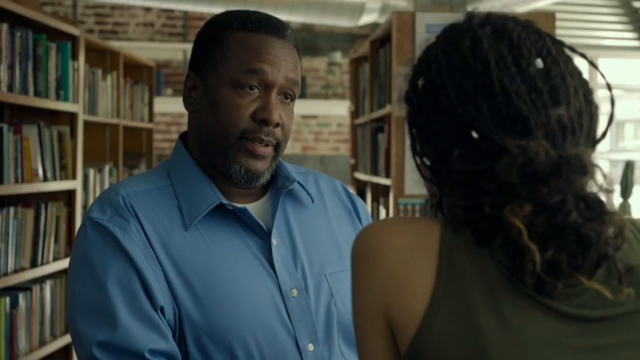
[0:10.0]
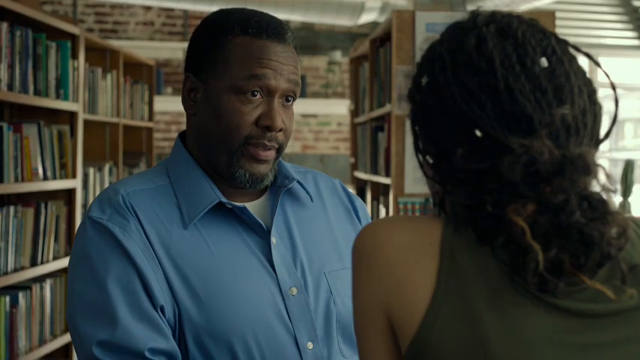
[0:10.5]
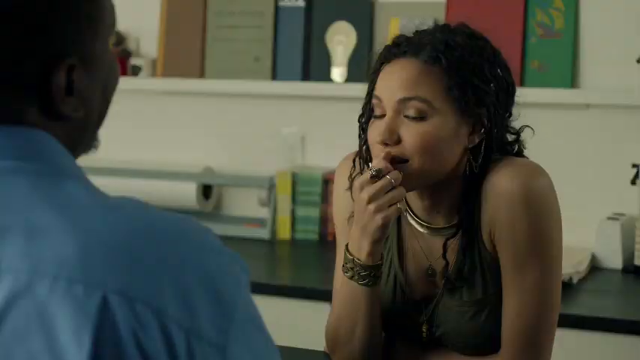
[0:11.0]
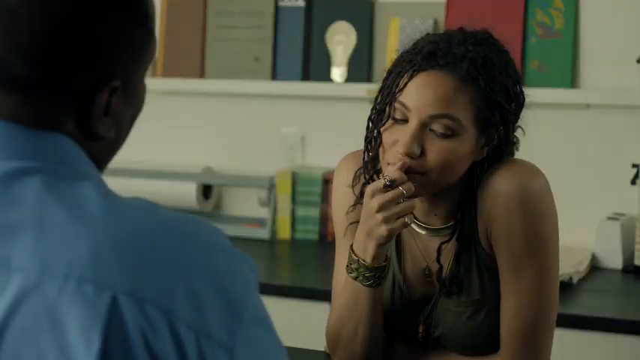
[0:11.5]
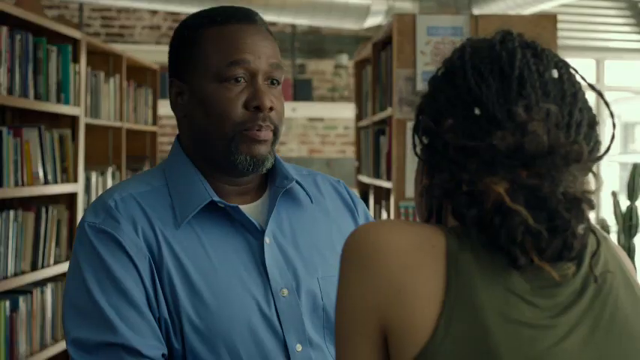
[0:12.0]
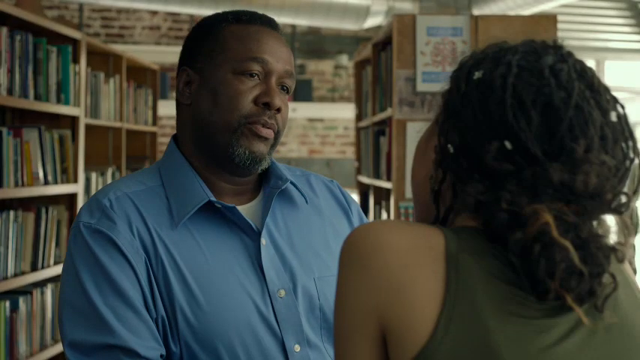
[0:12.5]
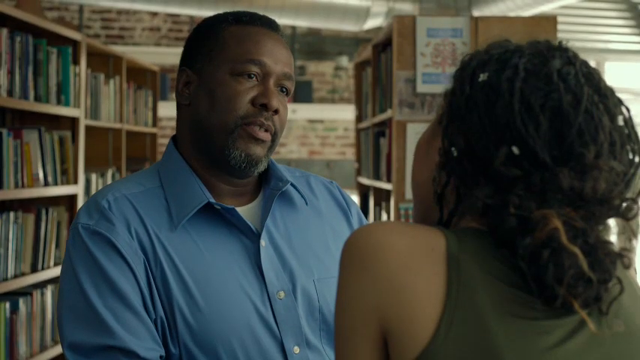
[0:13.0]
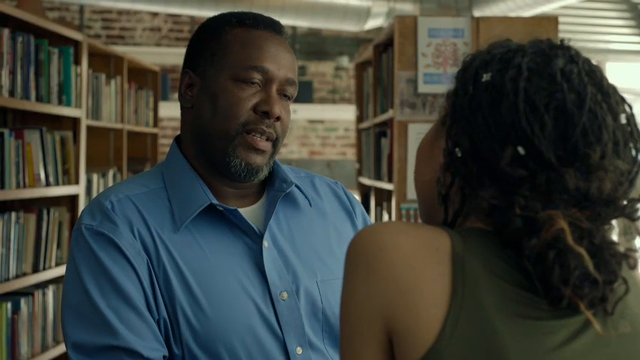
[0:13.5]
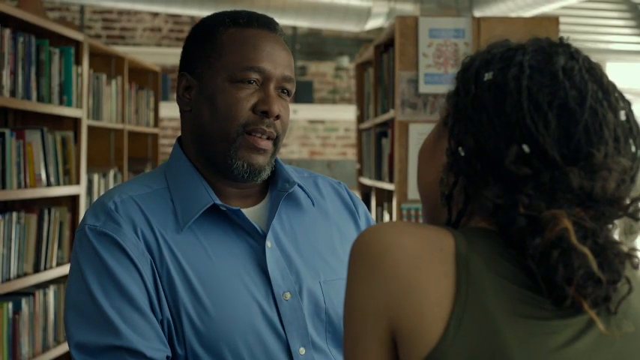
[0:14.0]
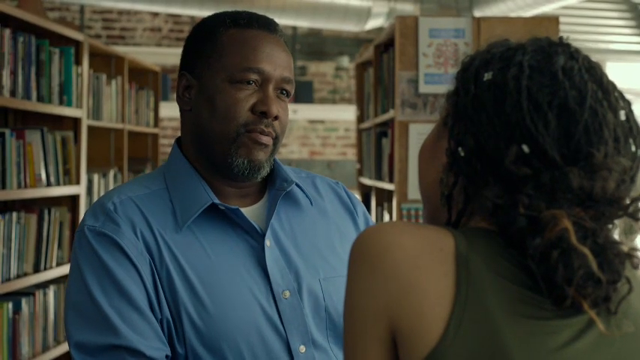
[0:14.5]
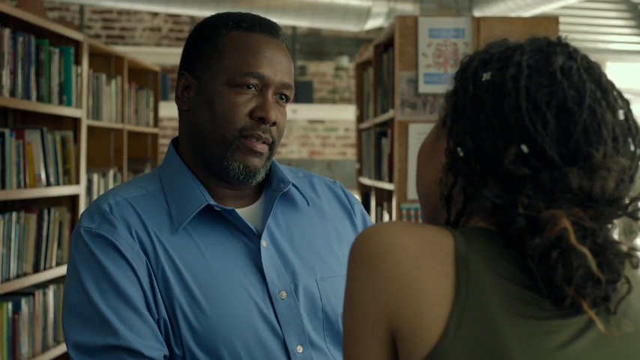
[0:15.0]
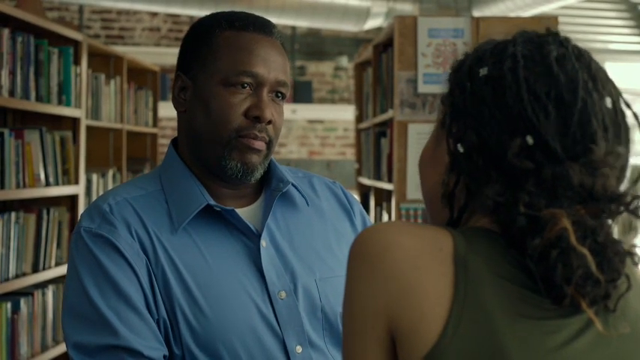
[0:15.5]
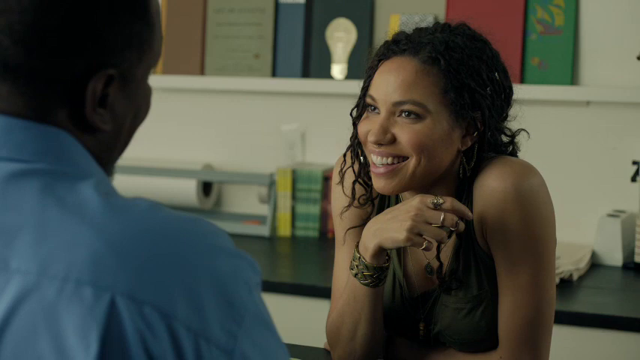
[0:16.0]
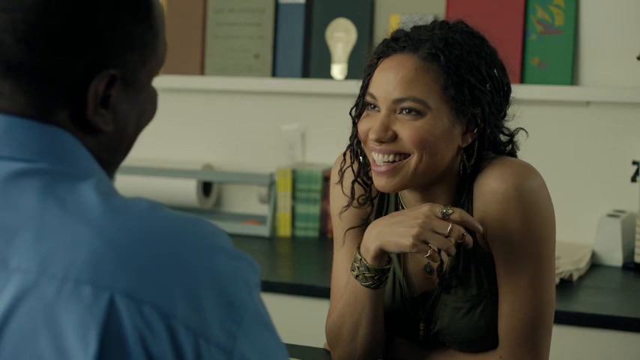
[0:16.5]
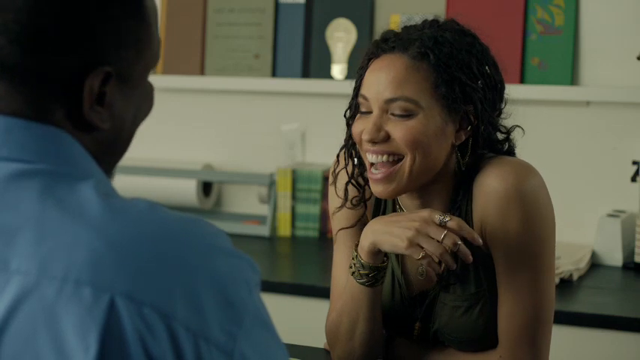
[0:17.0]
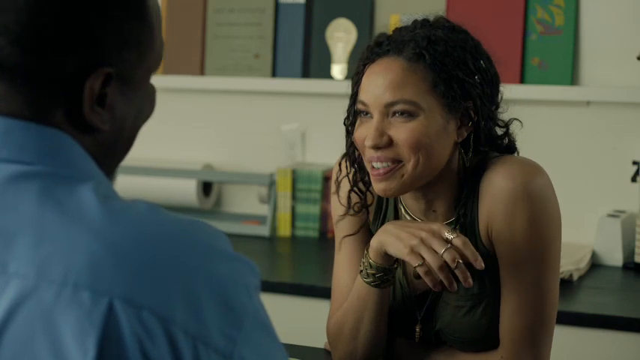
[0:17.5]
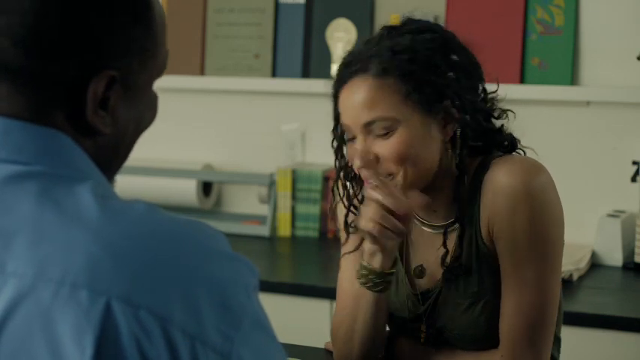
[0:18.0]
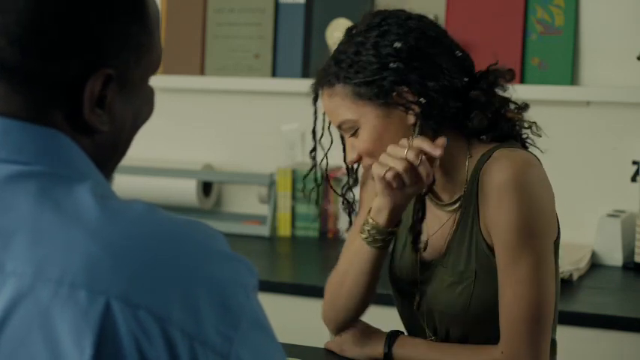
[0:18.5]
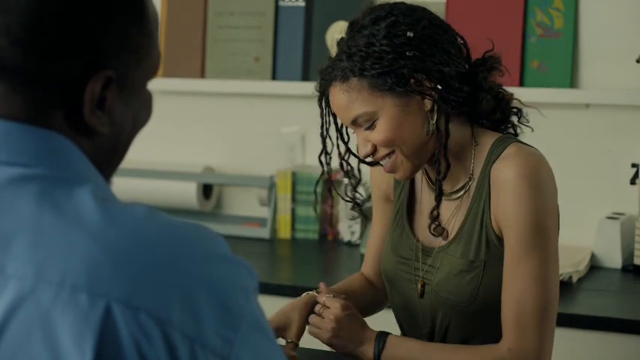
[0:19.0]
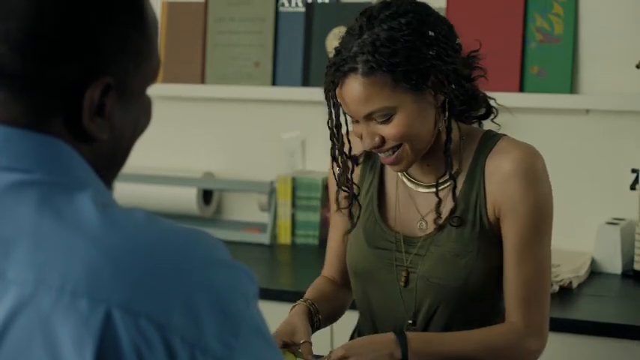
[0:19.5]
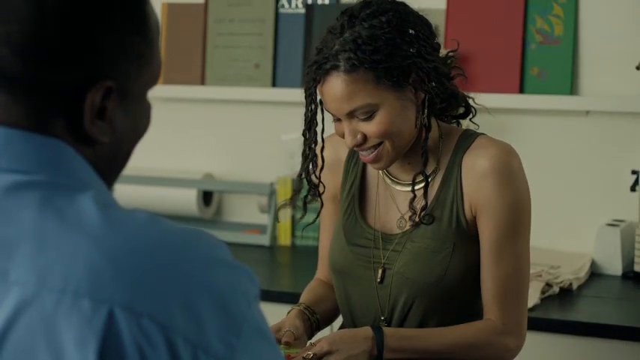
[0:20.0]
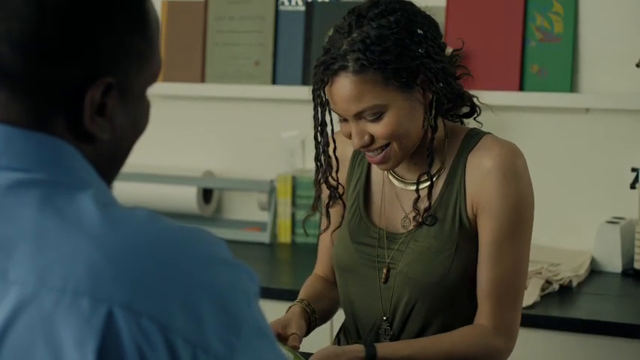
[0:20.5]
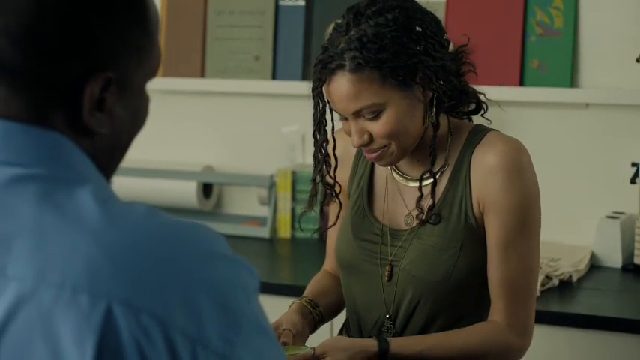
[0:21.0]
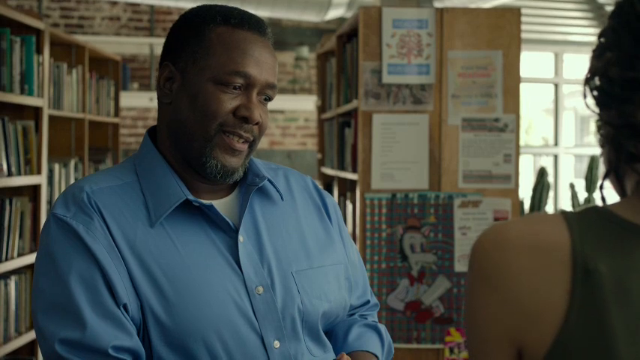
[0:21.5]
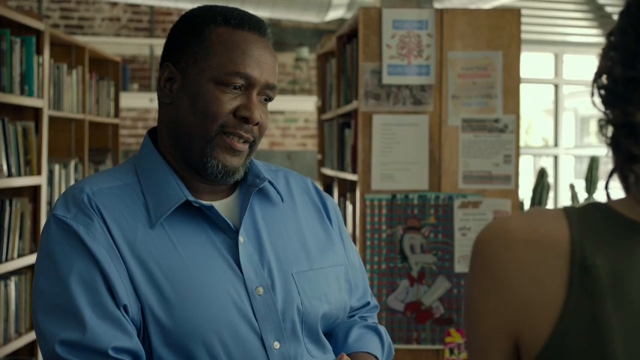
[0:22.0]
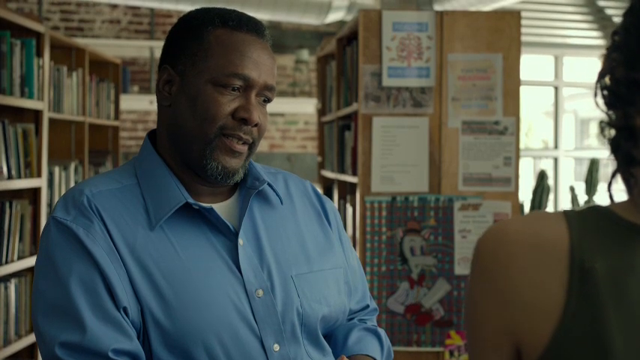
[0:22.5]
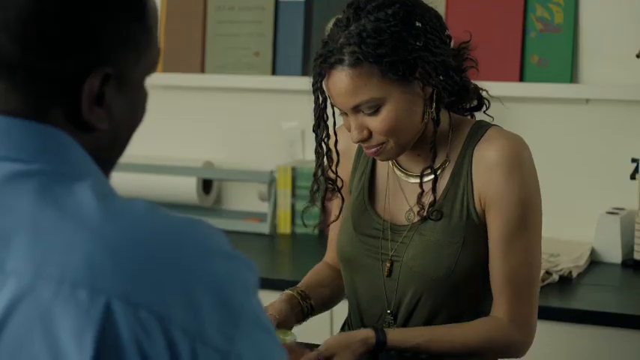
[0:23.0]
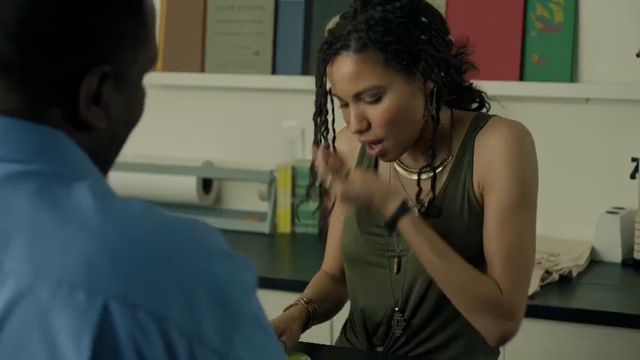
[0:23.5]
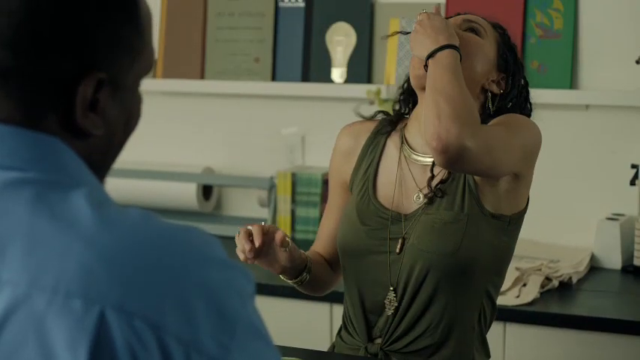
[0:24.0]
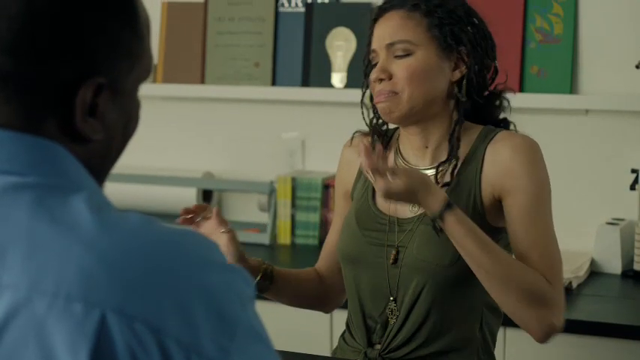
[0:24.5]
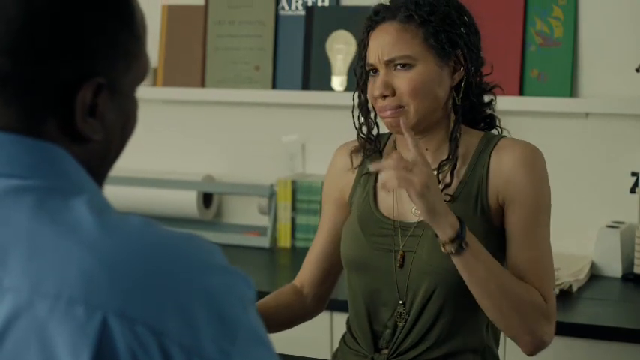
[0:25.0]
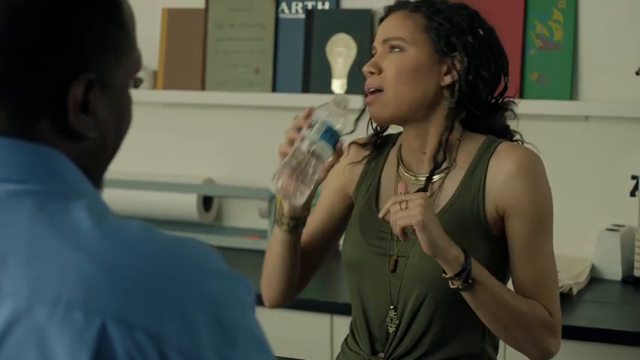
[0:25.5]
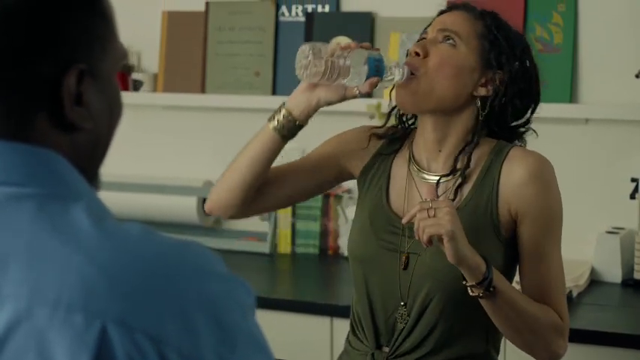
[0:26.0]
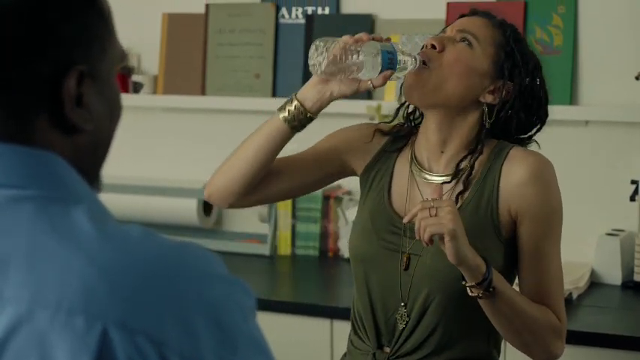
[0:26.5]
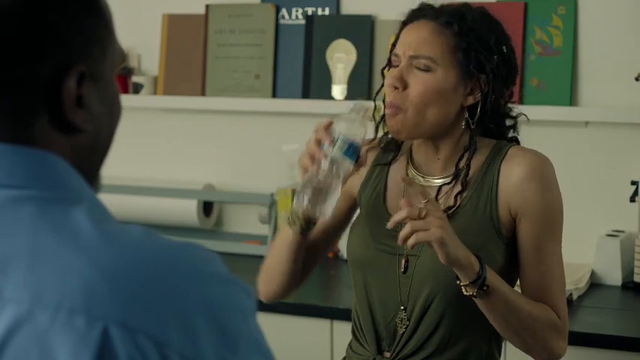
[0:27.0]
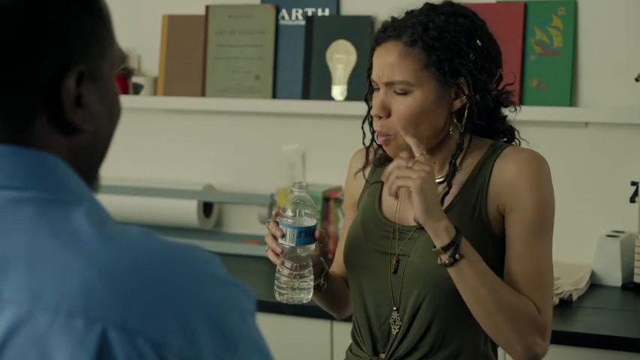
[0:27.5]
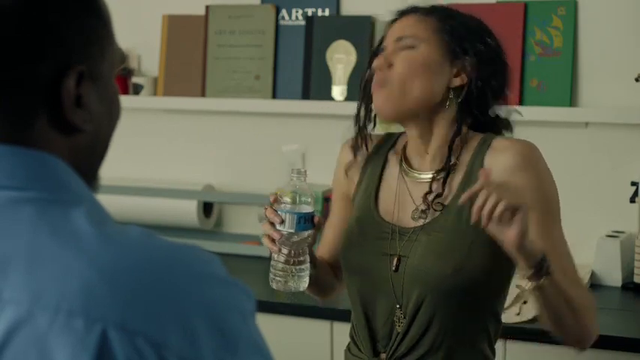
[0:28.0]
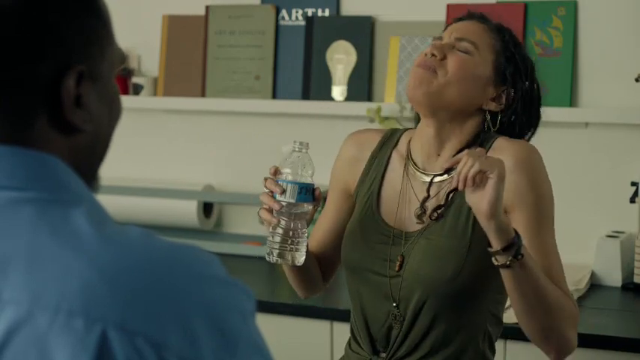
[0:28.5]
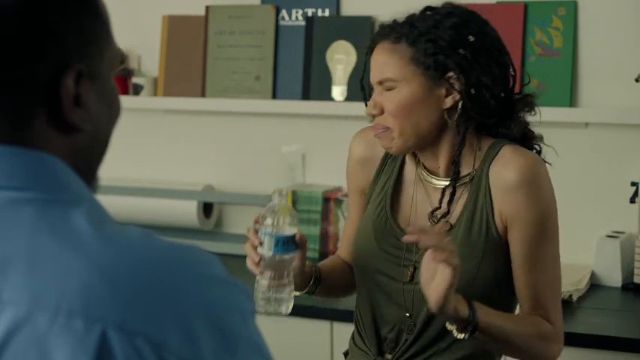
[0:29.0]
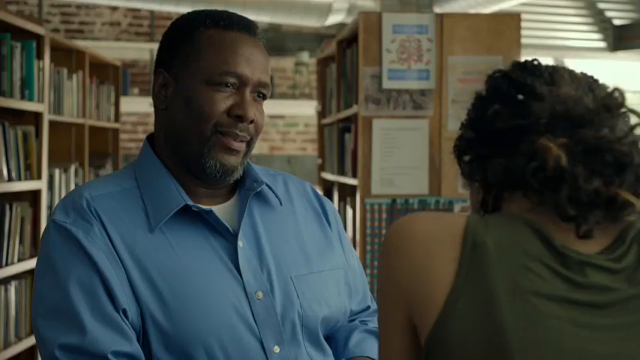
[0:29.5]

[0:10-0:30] In a library, two very high shelves of books stand in the background with a brick wall behind them. In the lower right foreground is the back of a young Black woman in a green tank top, with what may be dreadlocks running back along her head. Just left of center is a middle-aged Black man in a light blue button-up shirt with the top button unbuttoned and a white T-shirt underneath. He talks to her with a very neutral expression. The shot cuts to her smiling back, then returns to him as he says more to her. When it cuts back to her, she is smiling broadly, her right arm held in front of her with the wrist bent, horizontal across her chest. She wears three rings: one on her pointer finger, one on her middle finger and one on her pinky. She nods as she talks back to him and raises her index finger as if saying hang on one second. She then looks down at something in front of her that is out of view, and it looks like she pops a pill.